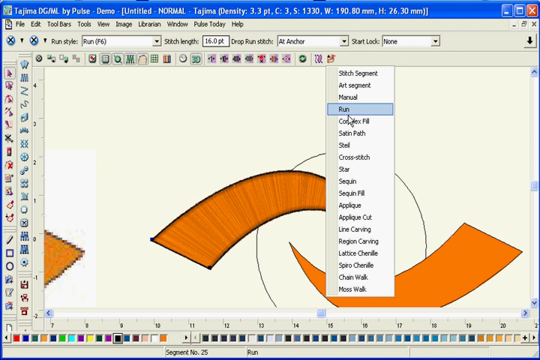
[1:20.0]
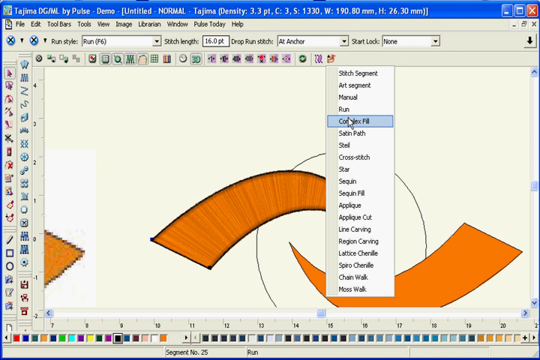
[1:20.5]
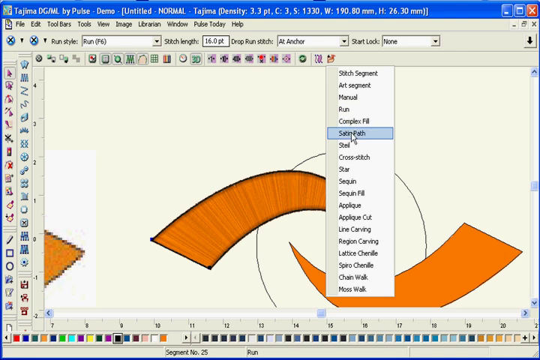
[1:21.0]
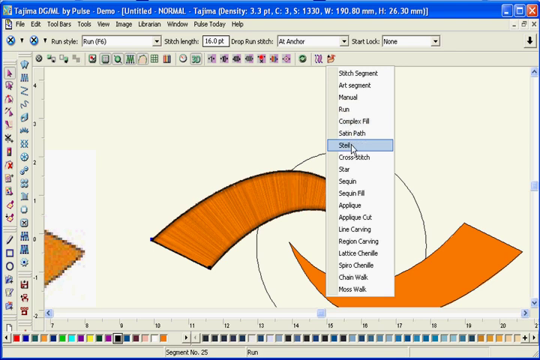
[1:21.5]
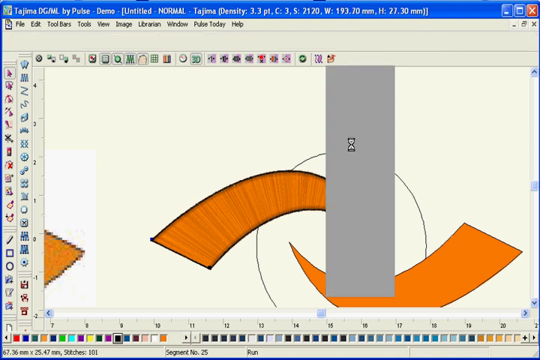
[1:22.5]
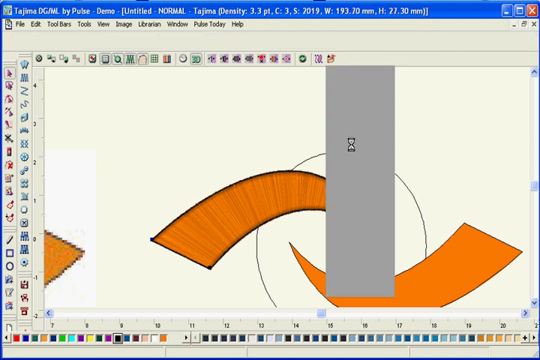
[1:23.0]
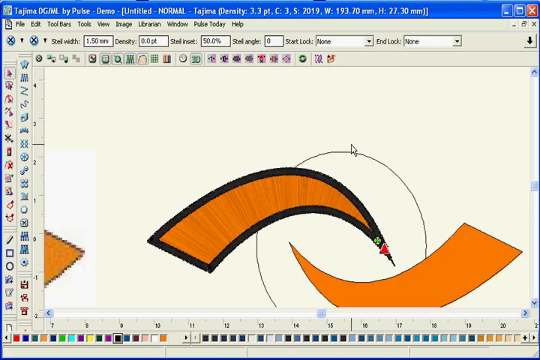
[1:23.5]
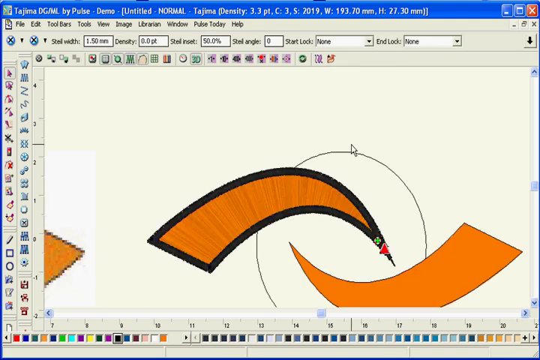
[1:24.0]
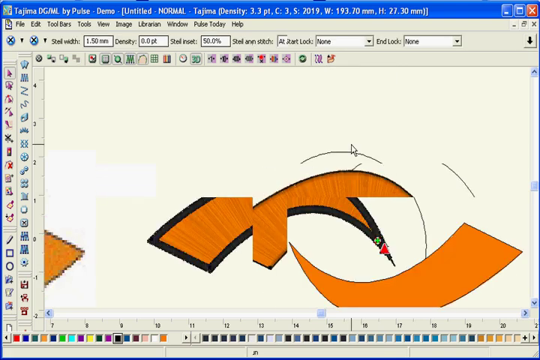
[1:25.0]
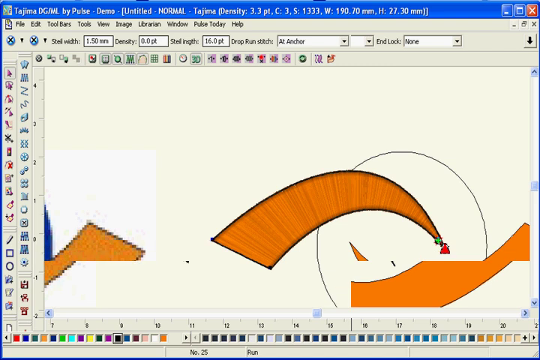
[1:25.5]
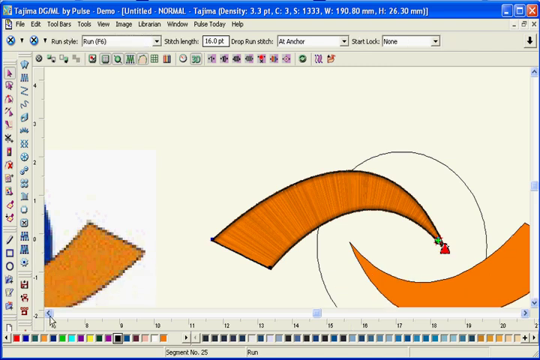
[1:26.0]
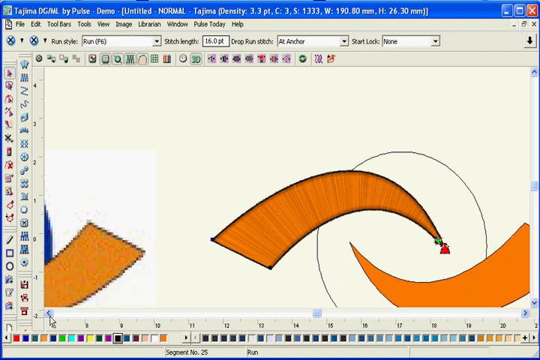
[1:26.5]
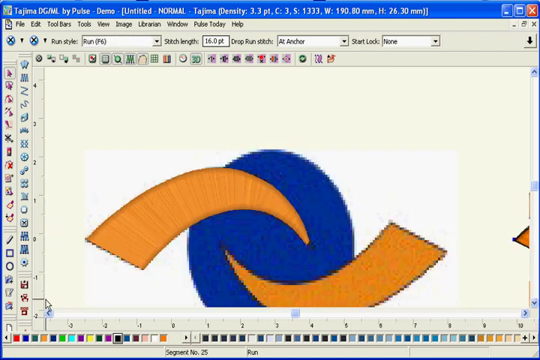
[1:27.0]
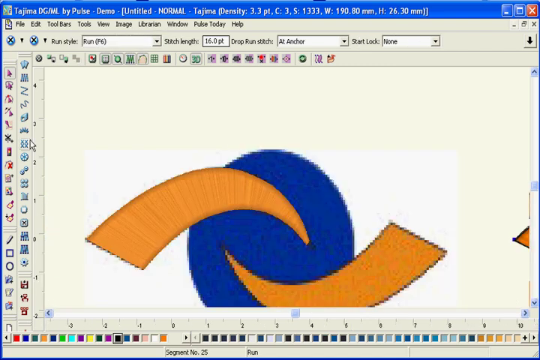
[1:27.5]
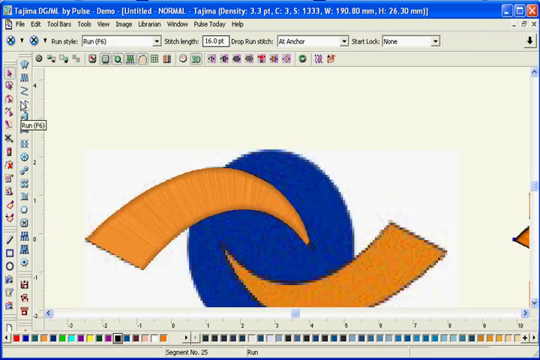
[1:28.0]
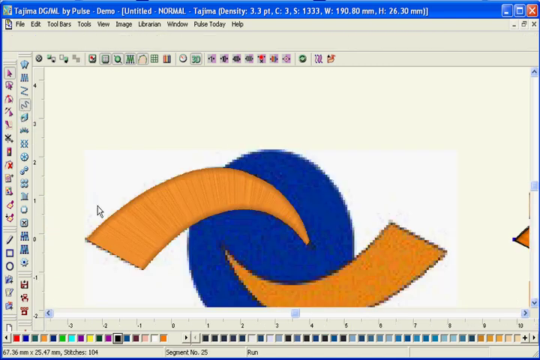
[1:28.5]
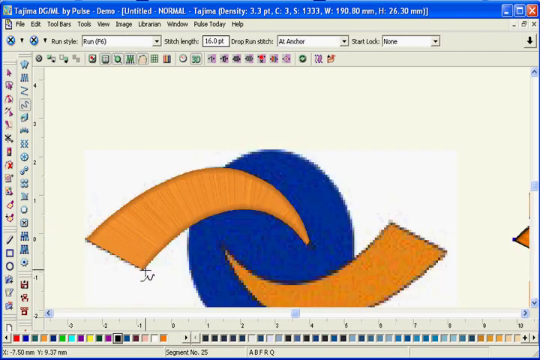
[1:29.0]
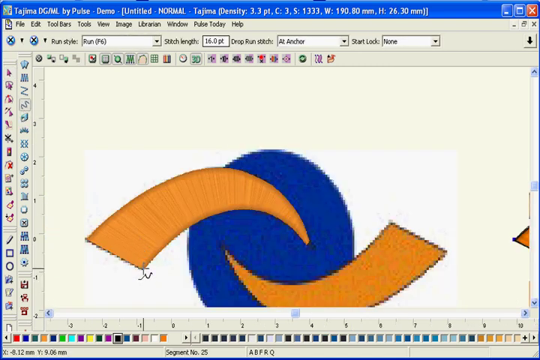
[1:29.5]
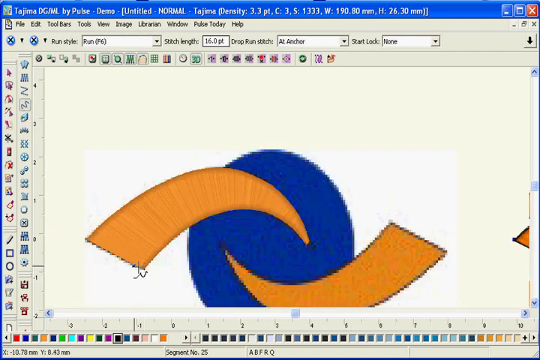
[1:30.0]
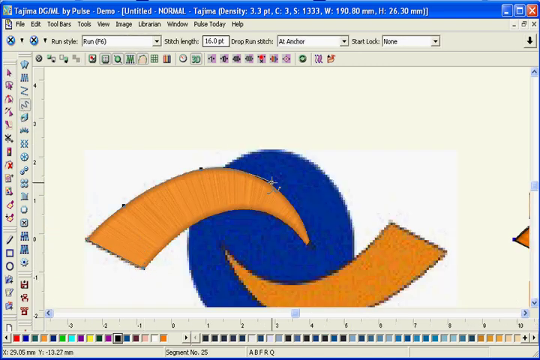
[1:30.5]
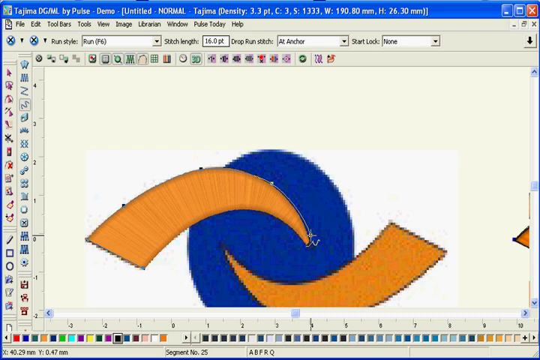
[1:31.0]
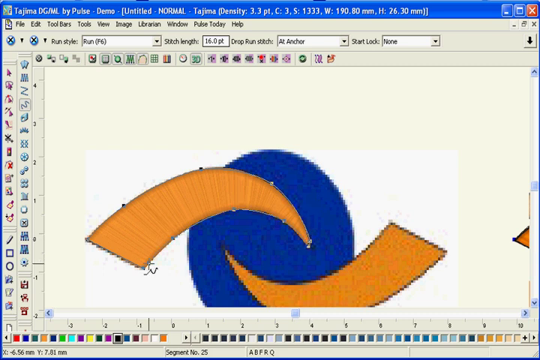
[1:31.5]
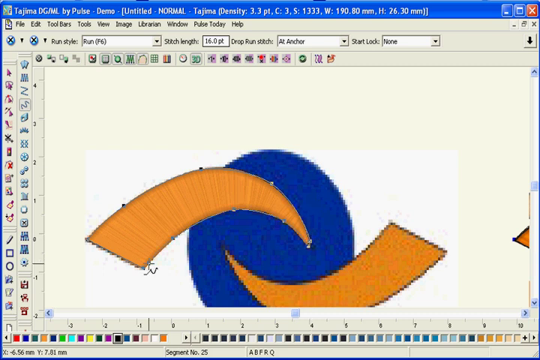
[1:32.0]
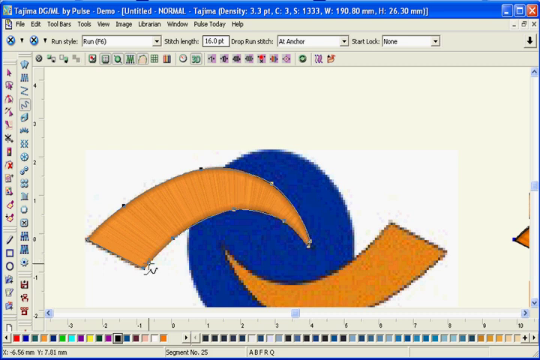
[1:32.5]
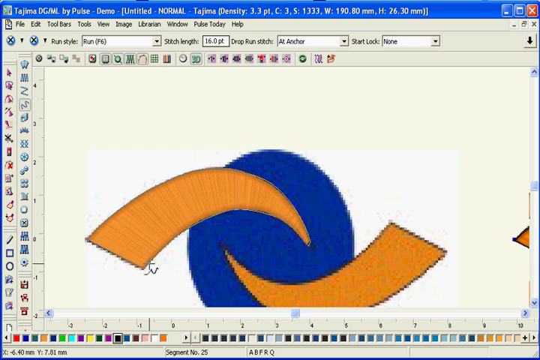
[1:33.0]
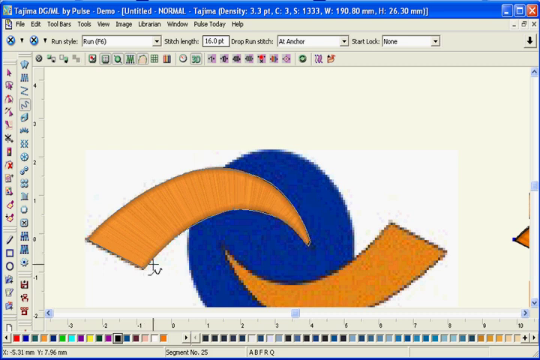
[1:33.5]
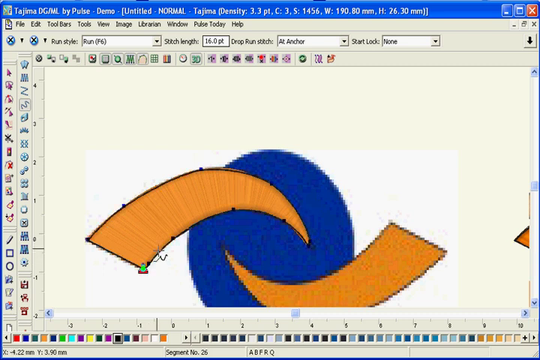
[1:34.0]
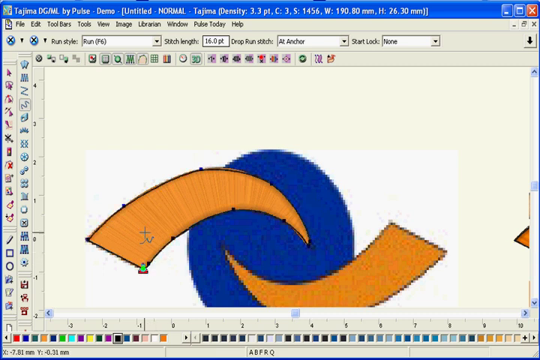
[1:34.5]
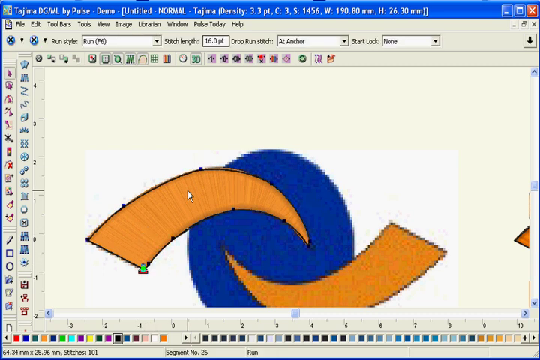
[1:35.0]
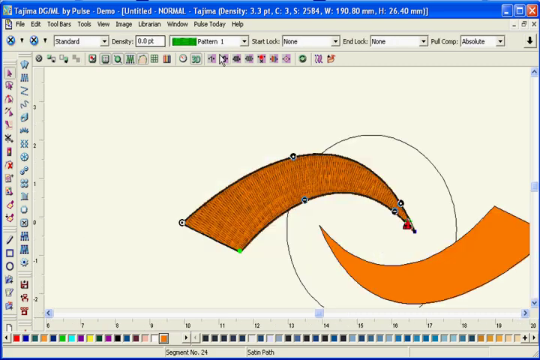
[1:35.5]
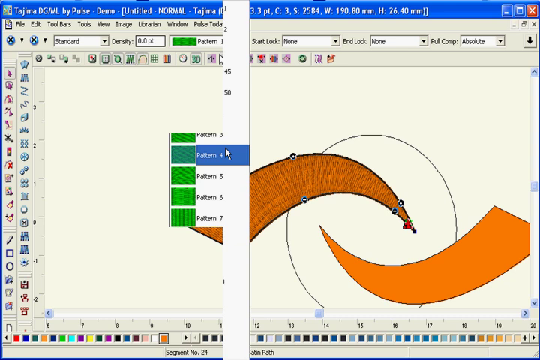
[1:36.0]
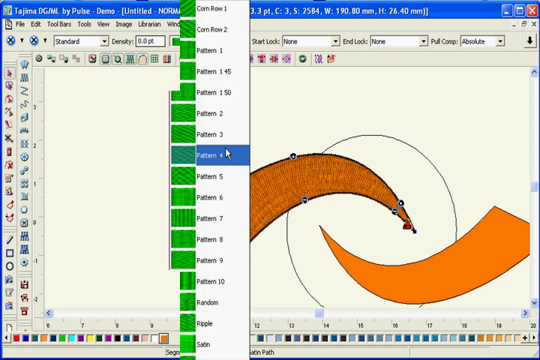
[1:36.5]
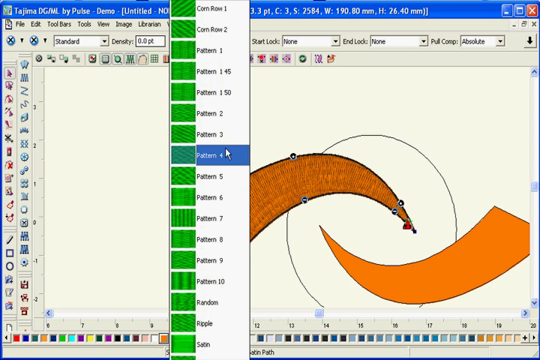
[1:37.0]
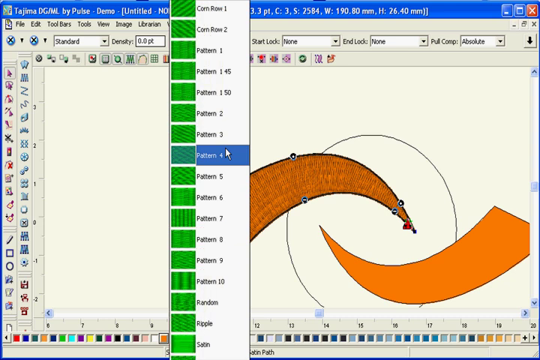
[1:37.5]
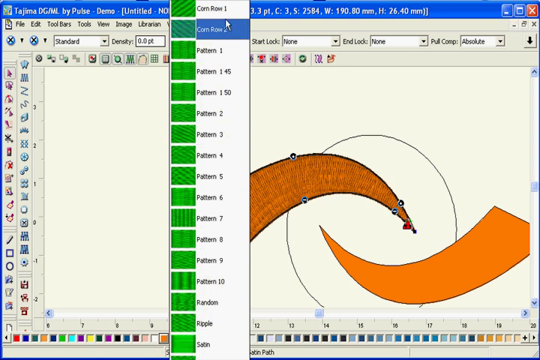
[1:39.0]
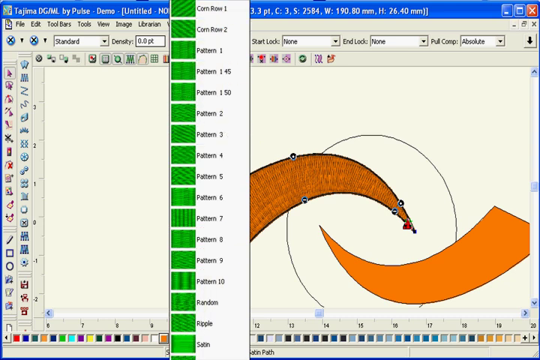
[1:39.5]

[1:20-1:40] Shapes are on the screen, and a pull-down menu runs from the top down close to the bottom. From top to bottom it lists "Stitch Segment", "Art Segment", "Manual", "Run" (which is clicked), "Satin", "Patch", "Cross Stitch", "Sew", "Sequin", "Sequin" again, "APPLQUE", "APPLQUE cut", "line carving", "region carving", "lattice", and another word that cannot be read. All around the menu is a white screen with a design that has orange going into a white sphere.